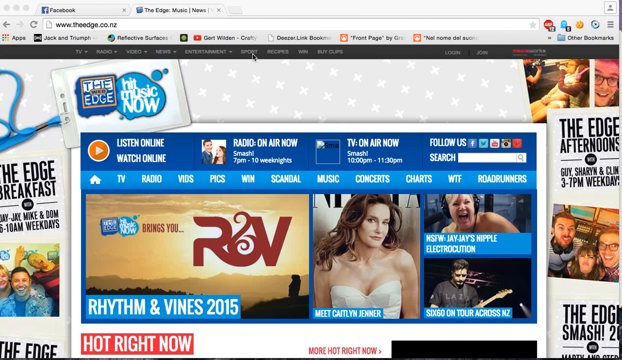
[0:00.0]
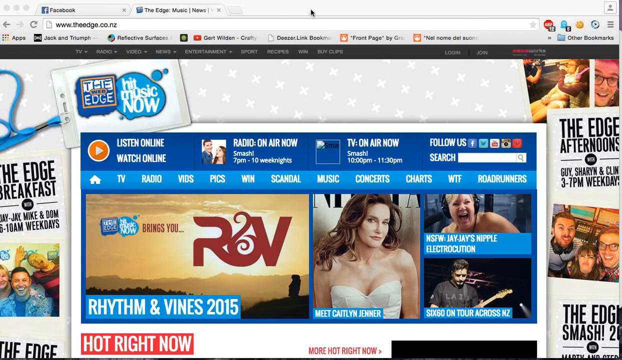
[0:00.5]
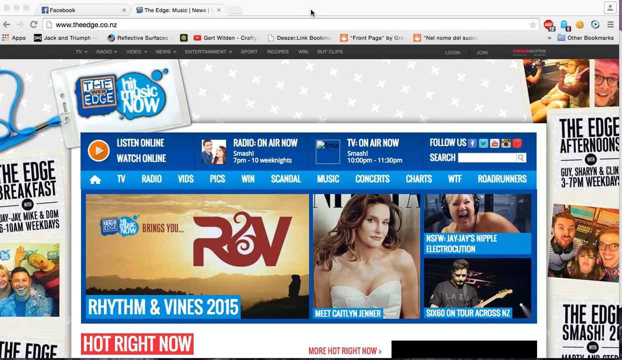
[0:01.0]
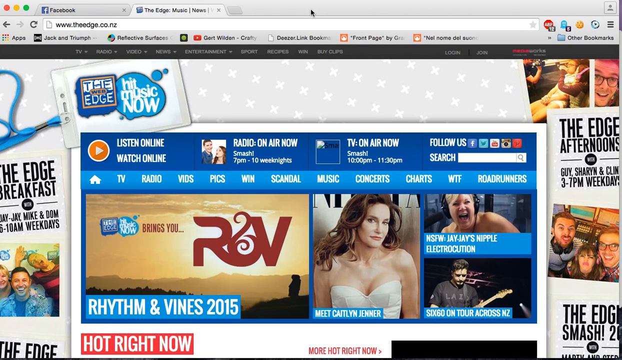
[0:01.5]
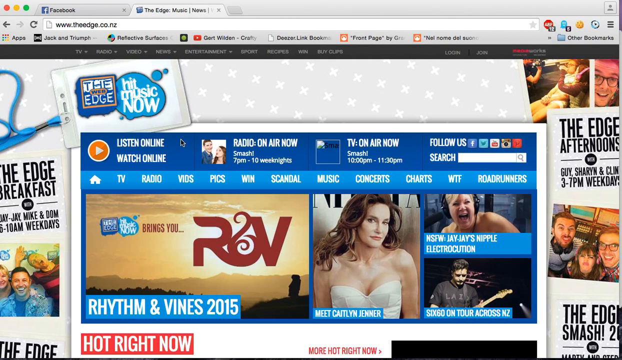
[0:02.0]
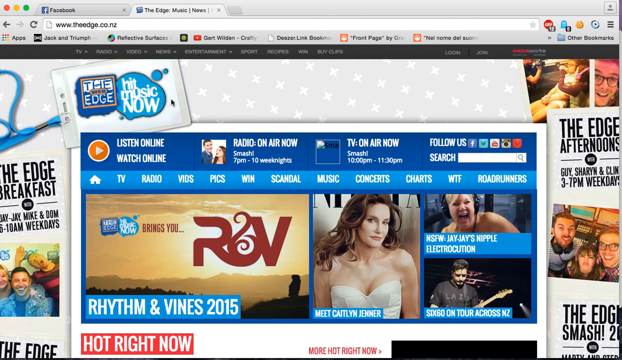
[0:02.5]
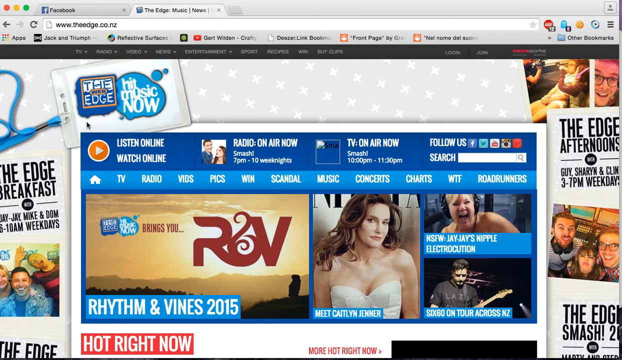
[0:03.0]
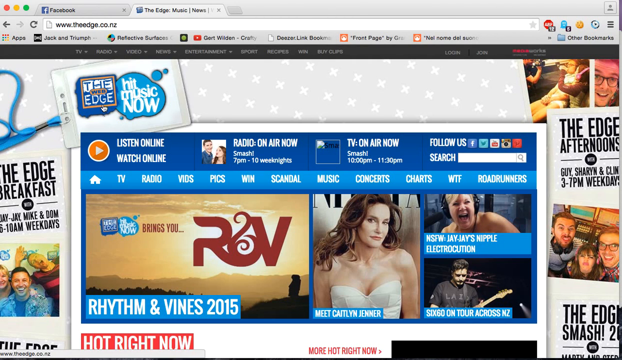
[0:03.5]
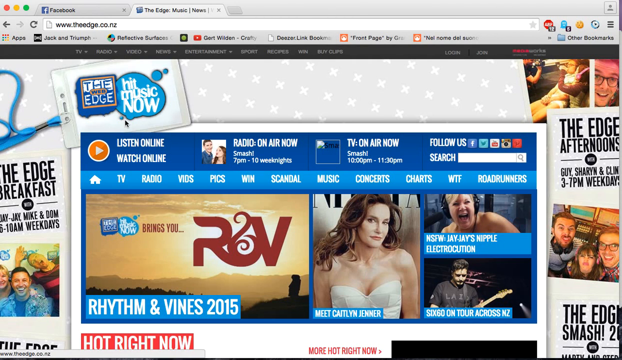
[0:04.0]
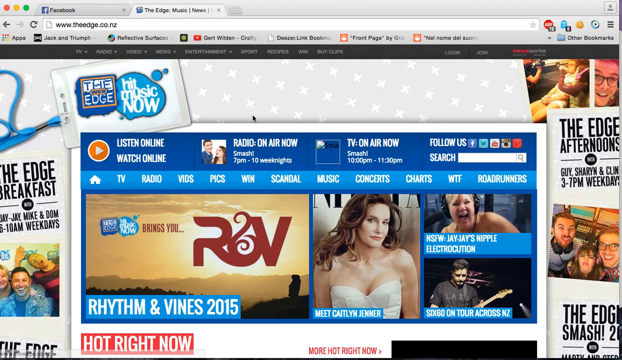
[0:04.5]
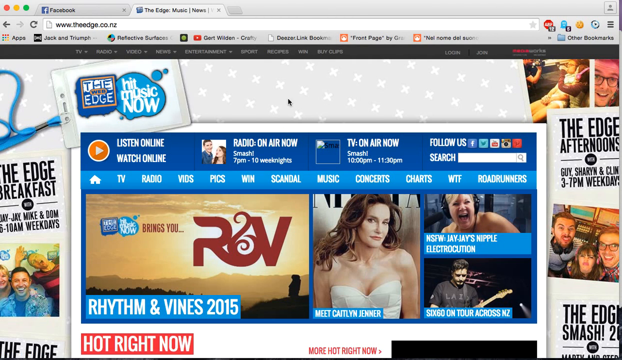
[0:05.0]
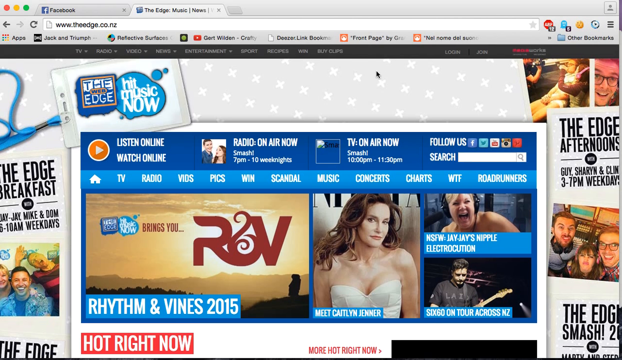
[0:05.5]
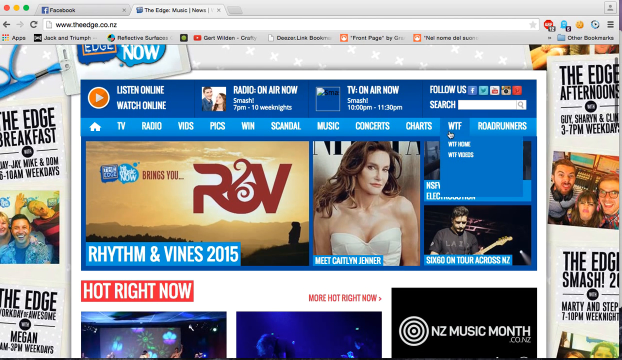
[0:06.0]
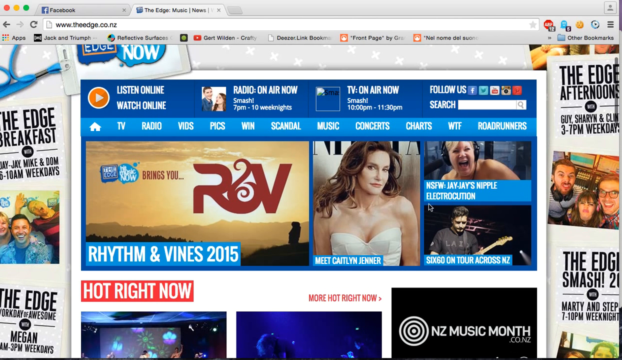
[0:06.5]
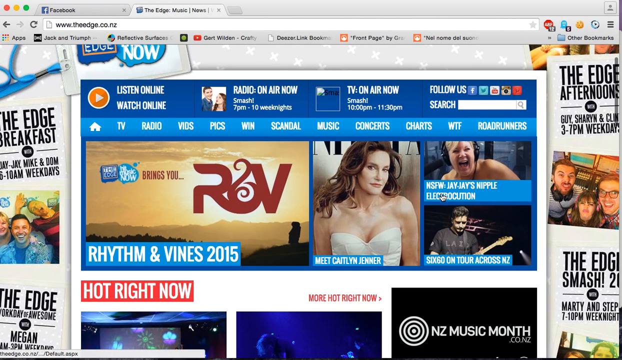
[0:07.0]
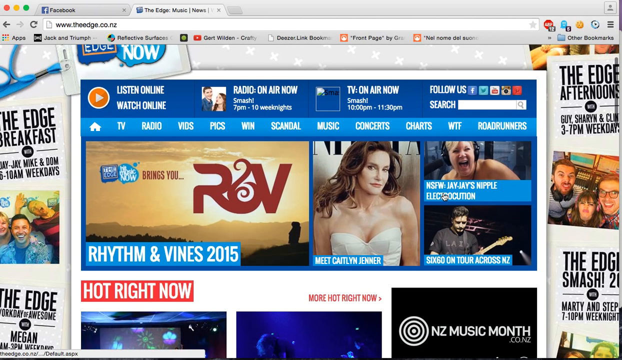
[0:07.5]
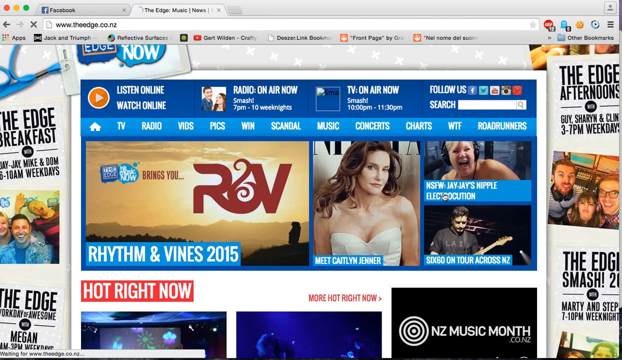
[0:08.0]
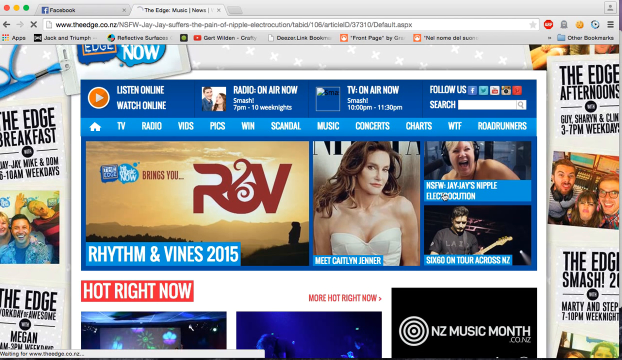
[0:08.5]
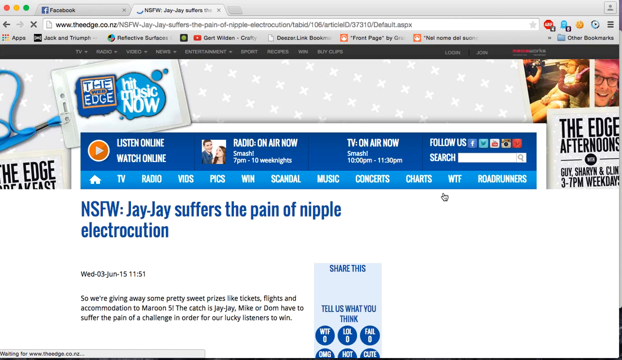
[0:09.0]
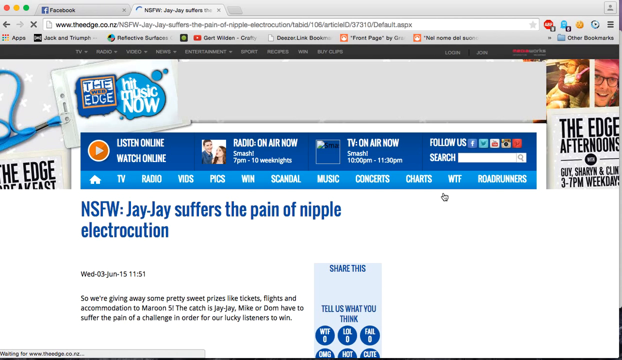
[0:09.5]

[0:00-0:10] An internet user browses the Edge homepage at the edge.co.nz. "The edge hit music now" is seen at the top of the page. On the sides there is an advertisement for a piece called the Edge Breakfast, and on the right side there is an advertisement for the Edge Afternoons. In the center are advertisements for R&B, Rhythm and Vines 2015, and entertainment. There is an image of Caitlyn Jenner along with other celebrities: one at the top wears headphones and is singing, and below is a man playing the guitar.